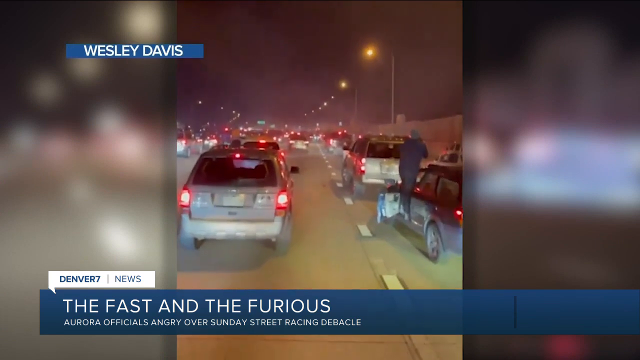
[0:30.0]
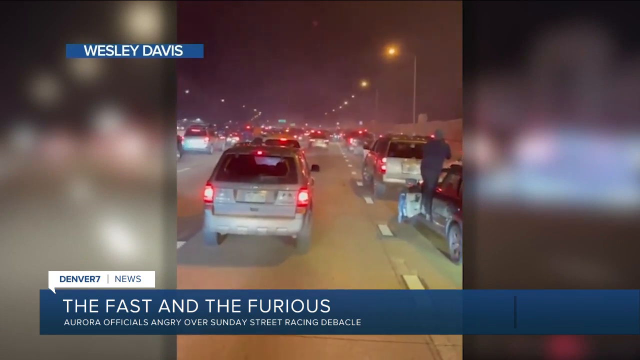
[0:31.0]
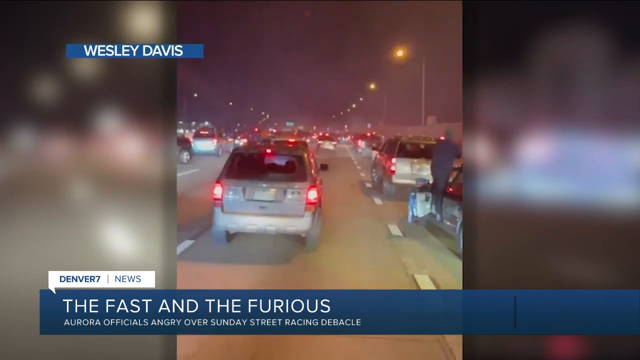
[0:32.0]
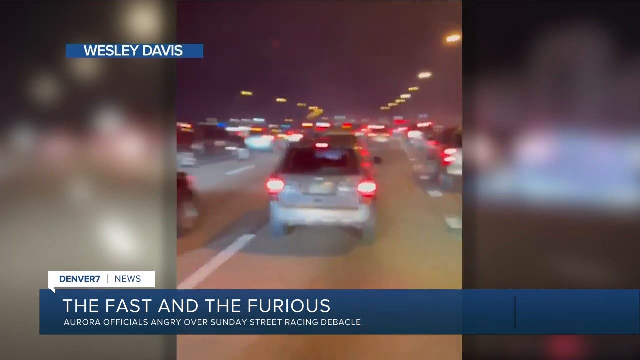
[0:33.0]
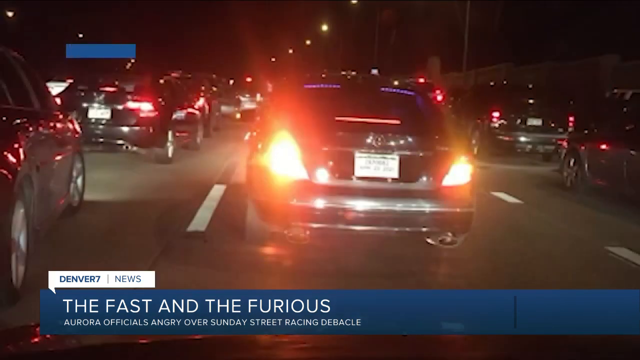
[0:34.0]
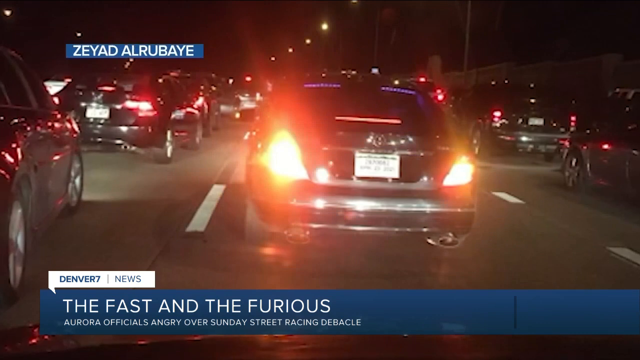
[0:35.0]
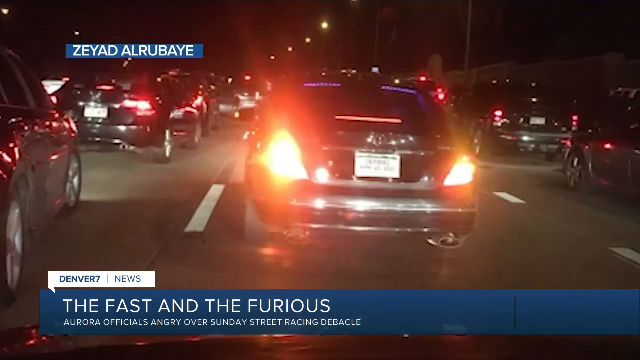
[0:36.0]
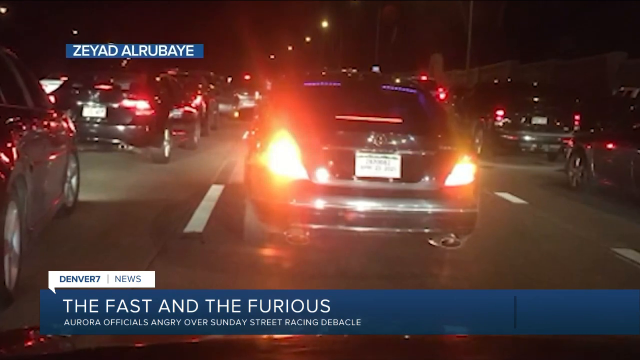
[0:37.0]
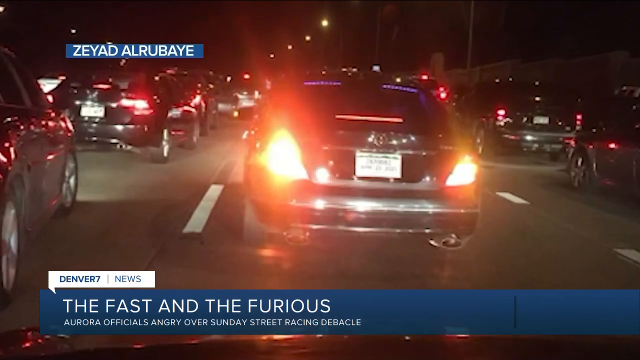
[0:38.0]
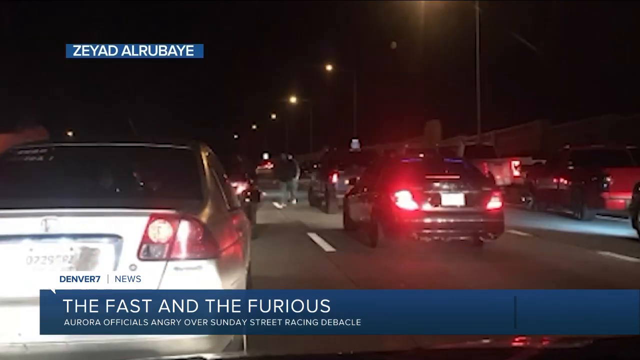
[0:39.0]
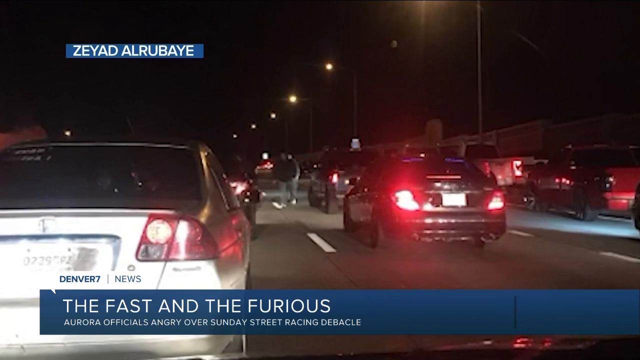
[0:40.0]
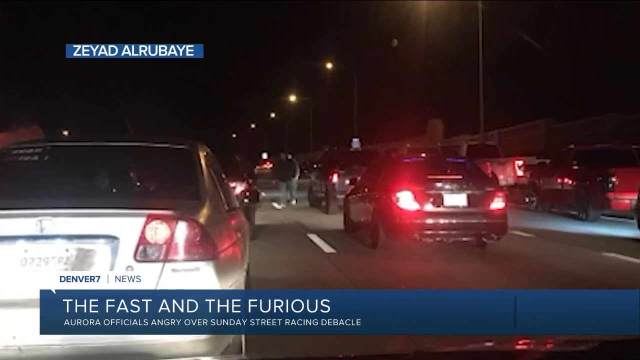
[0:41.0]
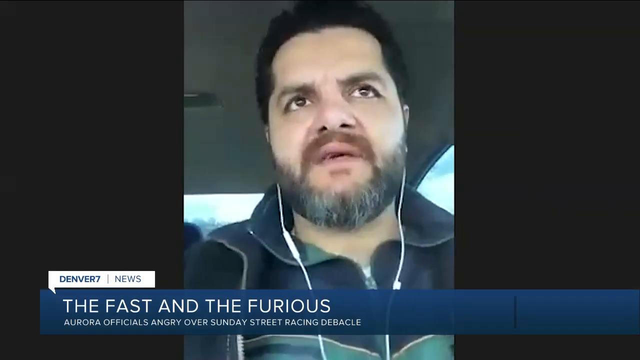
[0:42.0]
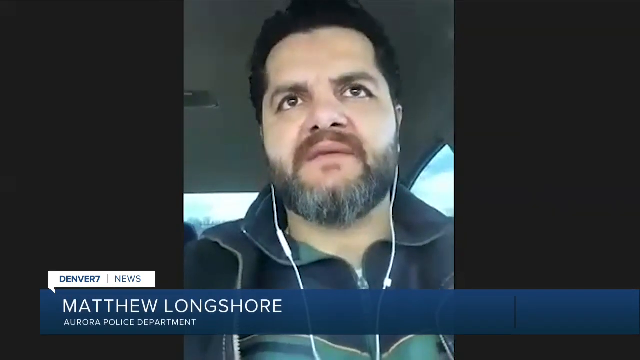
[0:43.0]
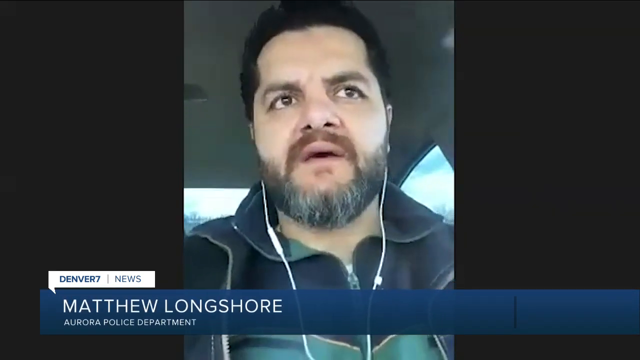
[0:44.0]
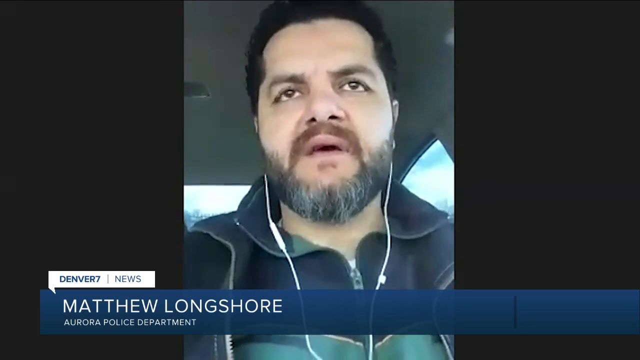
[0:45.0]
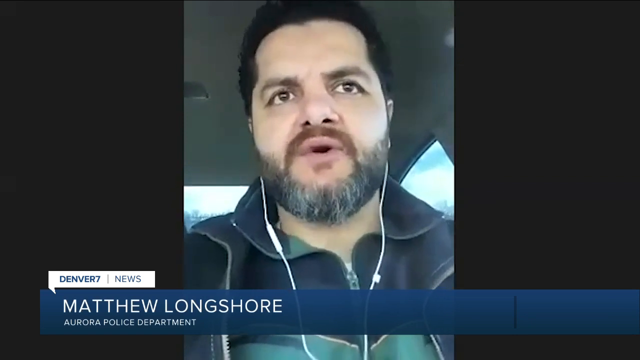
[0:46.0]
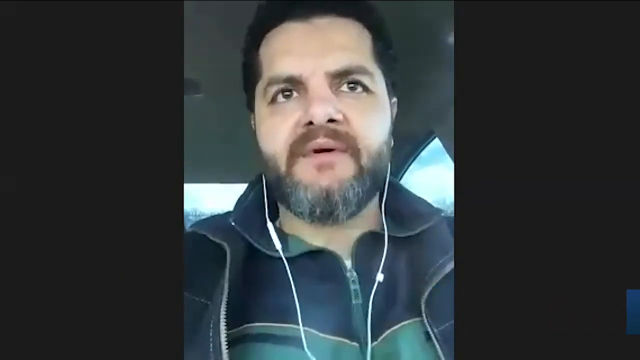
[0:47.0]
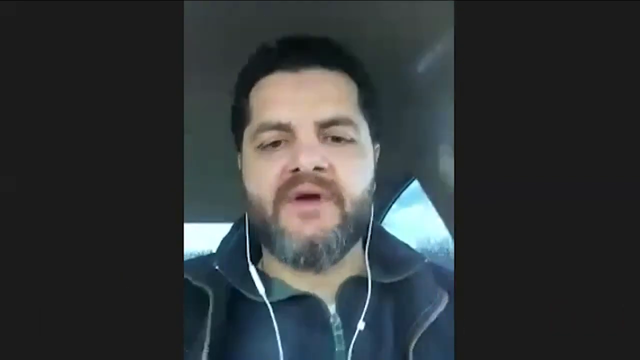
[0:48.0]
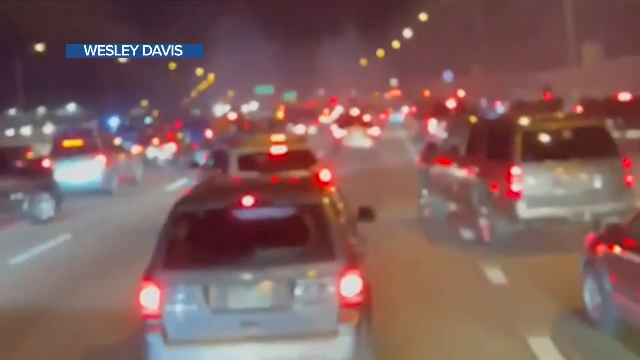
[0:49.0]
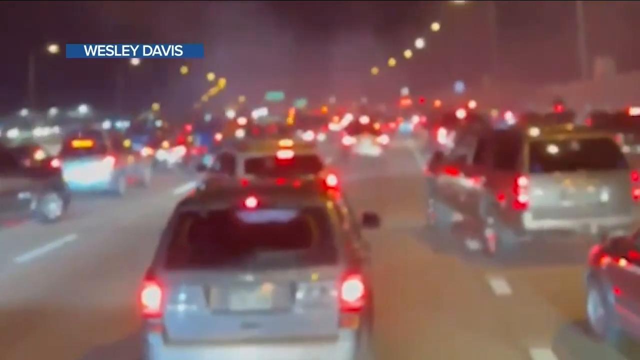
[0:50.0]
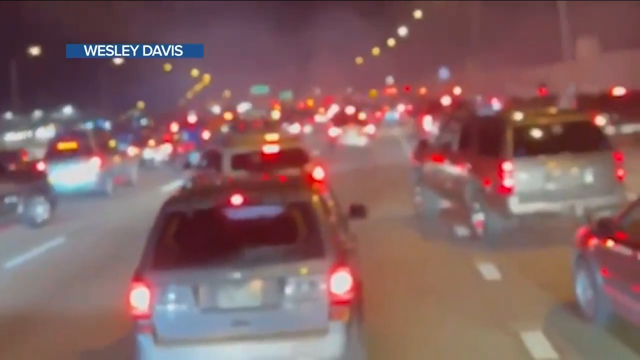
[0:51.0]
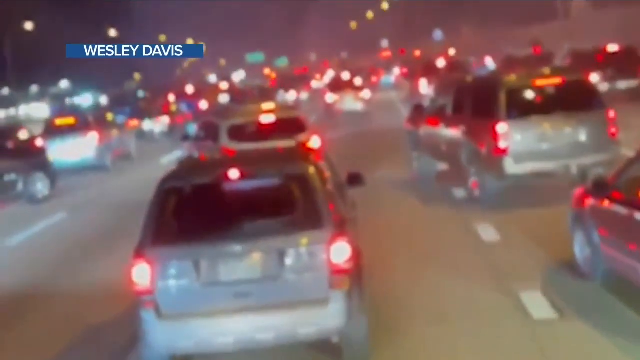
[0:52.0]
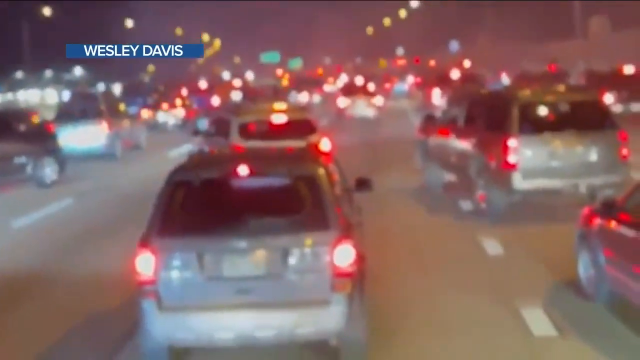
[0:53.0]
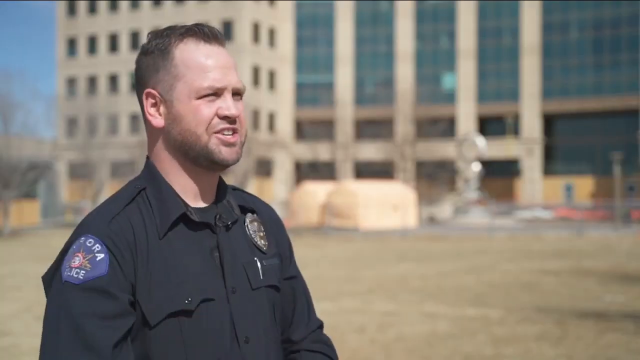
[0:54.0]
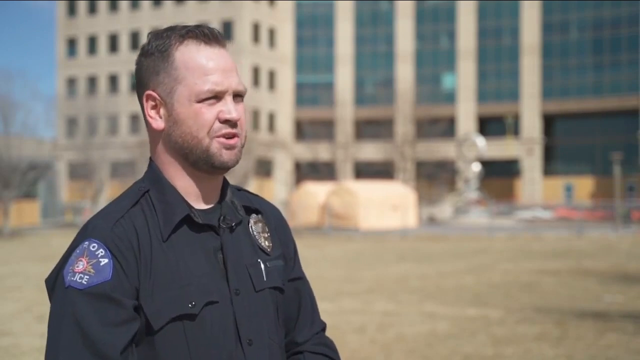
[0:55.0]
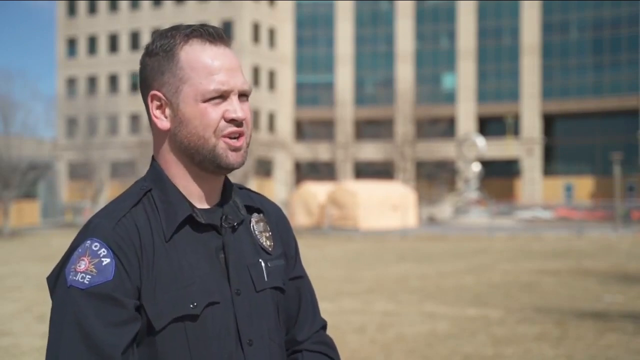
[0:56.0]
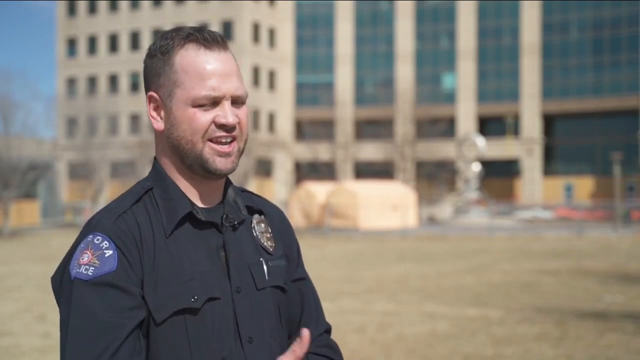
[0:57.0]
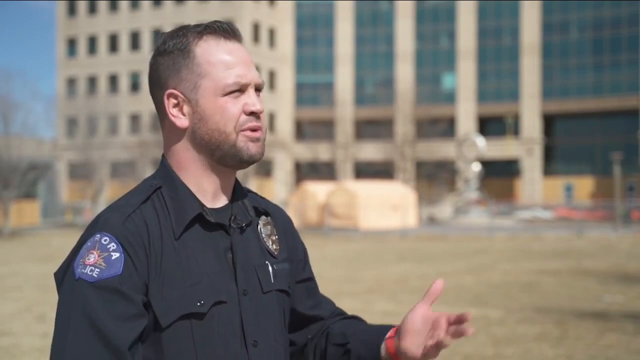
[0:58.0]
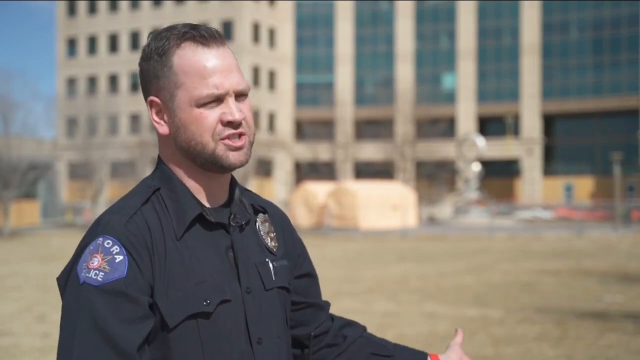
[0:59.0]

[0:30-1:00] The camera continues to film, going in and out of focus, and moves left. After a transition, the name "ZEYAD ALRUBAYE" is shown in the top left, and in the center of the screen a car has its back lights on. The camera zooms in and the scene transitions to more cars, including a white car on the bottom left of the screen. The camera zooms in again and the scene transitions to a light-skinned man in the middle of the screen with short dark hair and a brown beard and mustache with lots of gray streaks. He wears a black collared zip-up and white wired earbuds, and he begins to talk. Below him the name "MATTHEW LONGSHORE" appears with the subtext "Aurora Police Department"; this information swipes across and exits to the right. The scene transitions to more cars in traffic, with a lot of taillights lit up, and it looks smoky. The camera moves around shakily. Then a police officer is seen on the right side of the frame, standing in front of a building; he begins to talk and gesture with his hands.